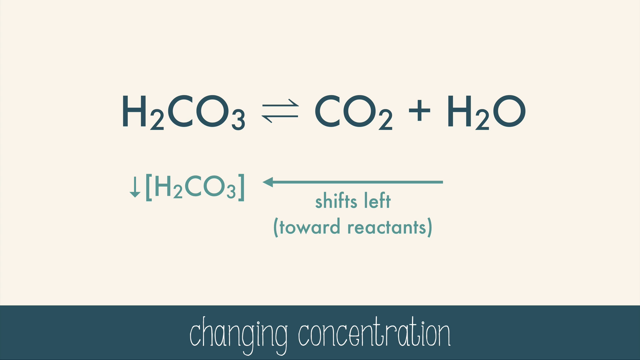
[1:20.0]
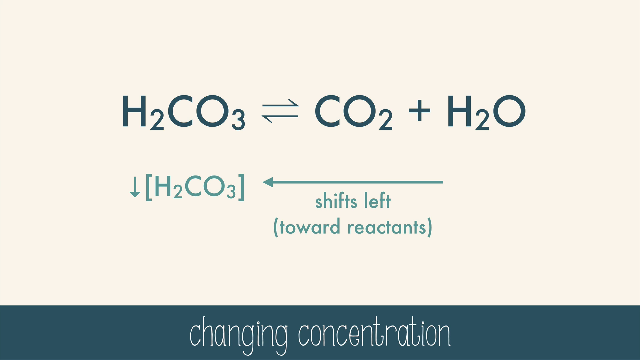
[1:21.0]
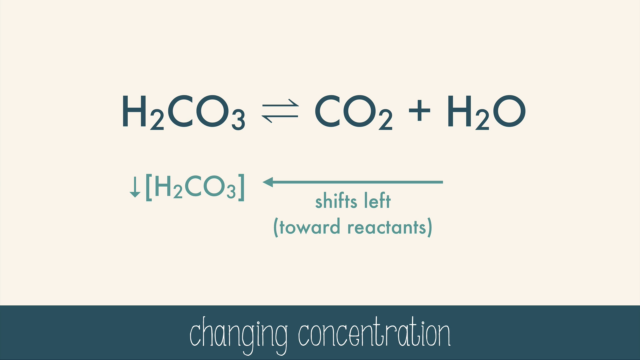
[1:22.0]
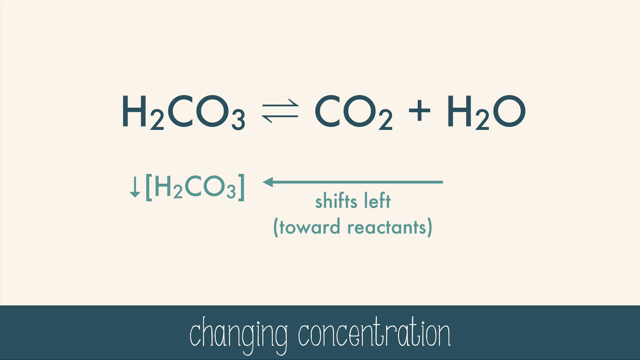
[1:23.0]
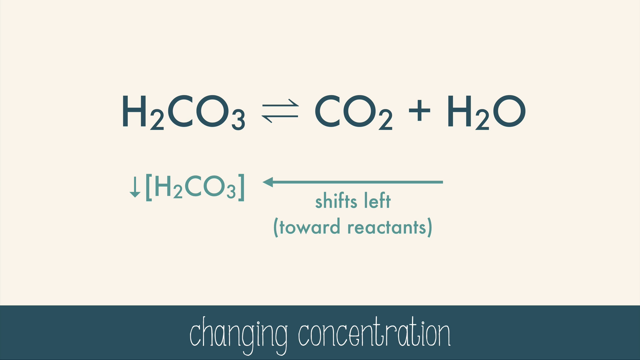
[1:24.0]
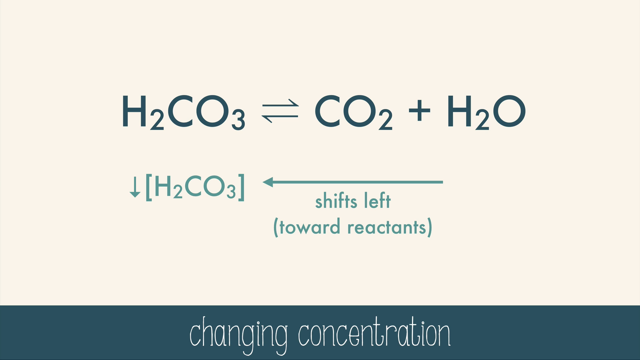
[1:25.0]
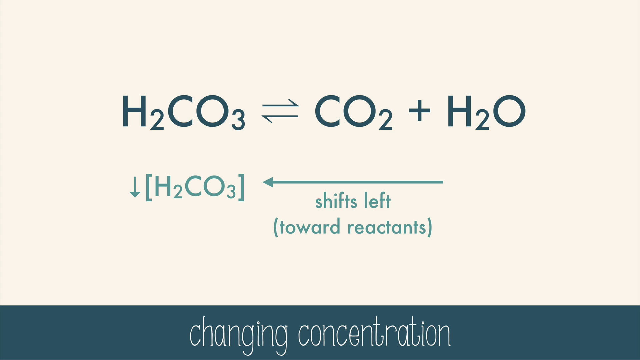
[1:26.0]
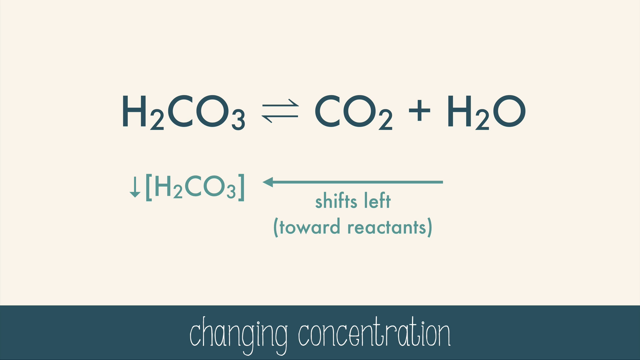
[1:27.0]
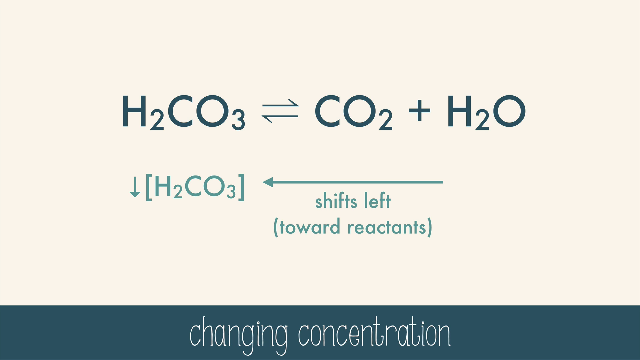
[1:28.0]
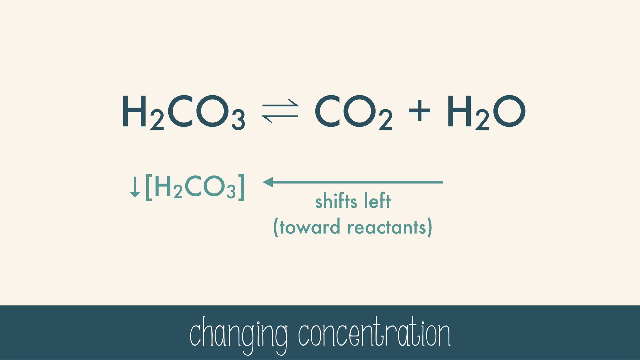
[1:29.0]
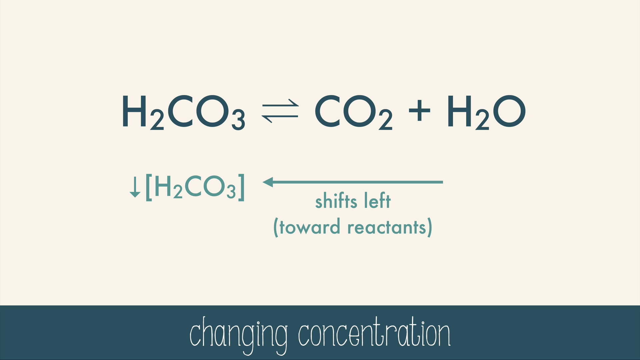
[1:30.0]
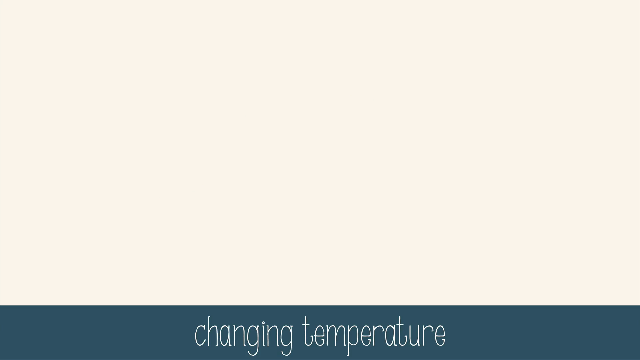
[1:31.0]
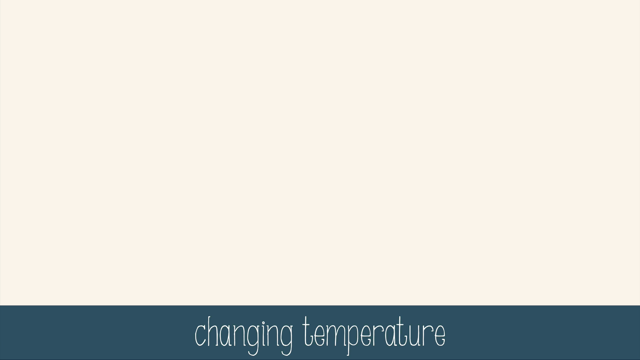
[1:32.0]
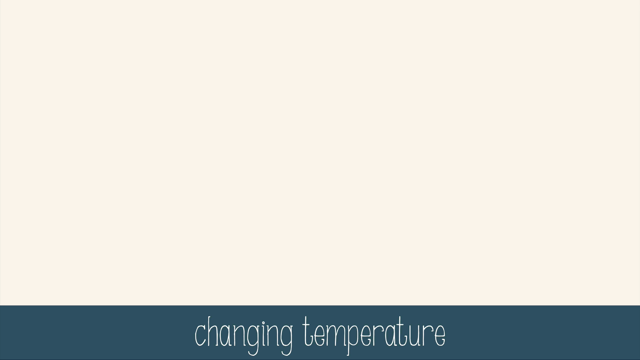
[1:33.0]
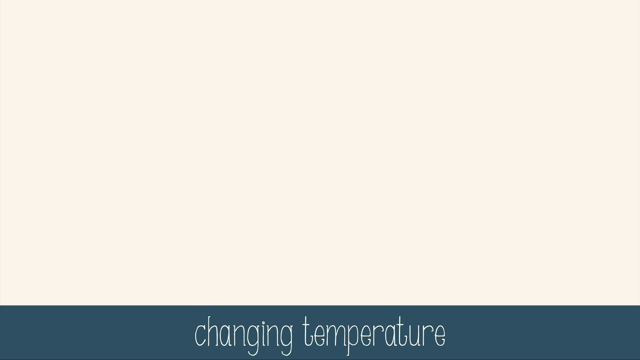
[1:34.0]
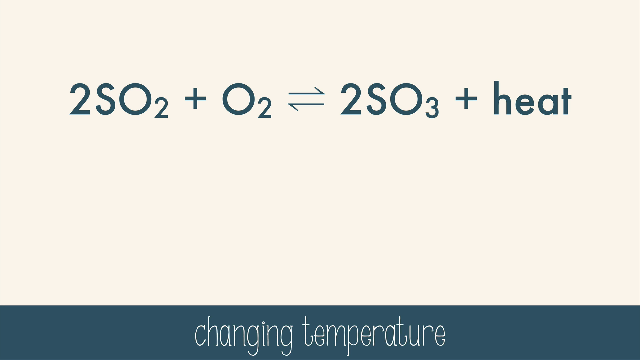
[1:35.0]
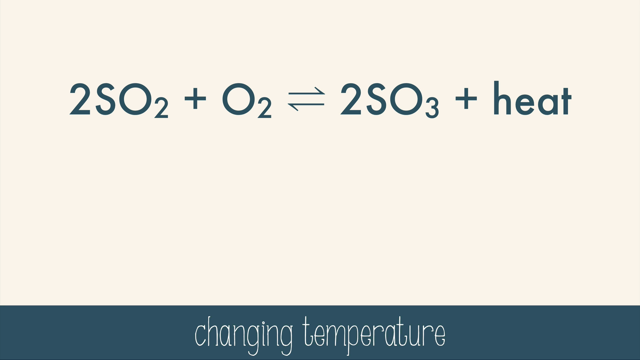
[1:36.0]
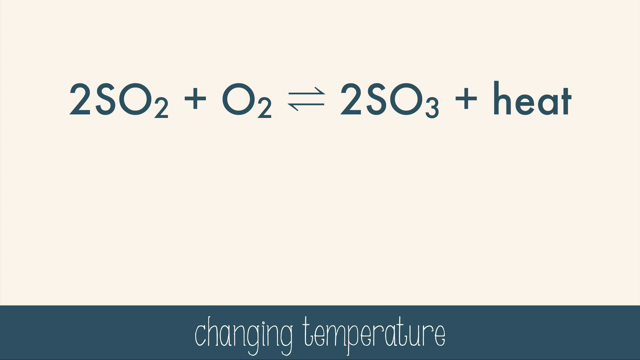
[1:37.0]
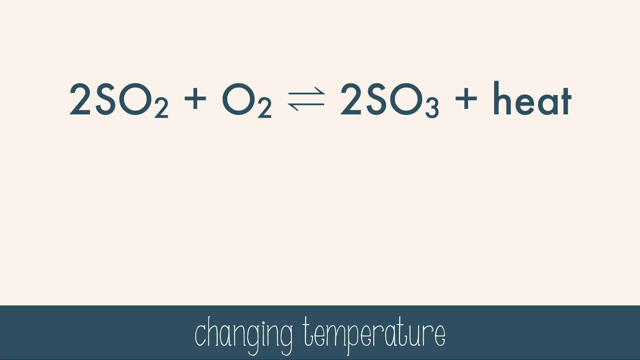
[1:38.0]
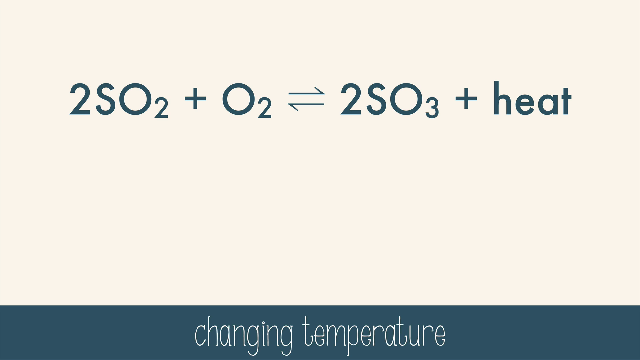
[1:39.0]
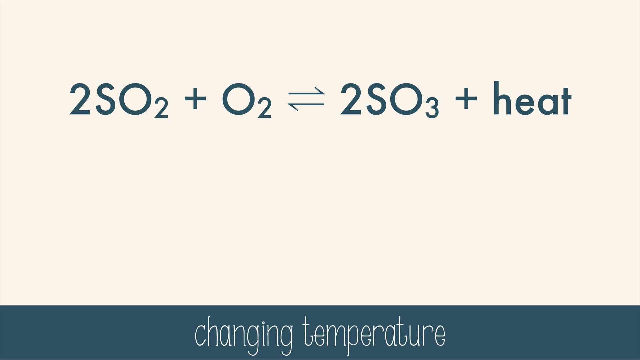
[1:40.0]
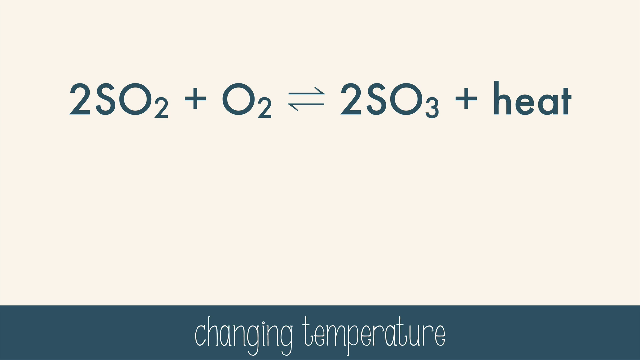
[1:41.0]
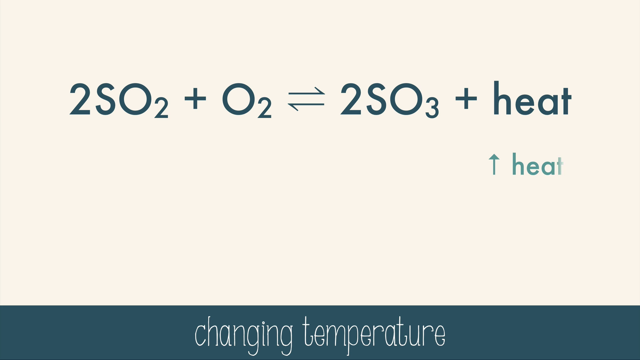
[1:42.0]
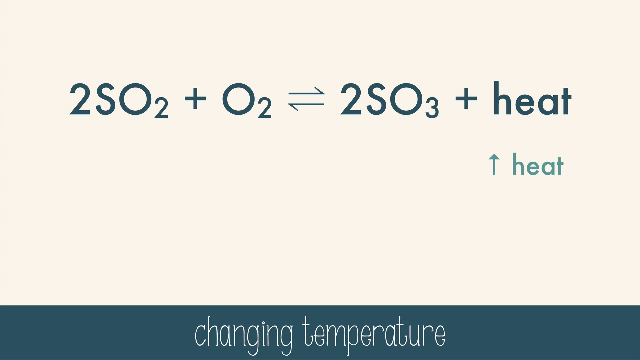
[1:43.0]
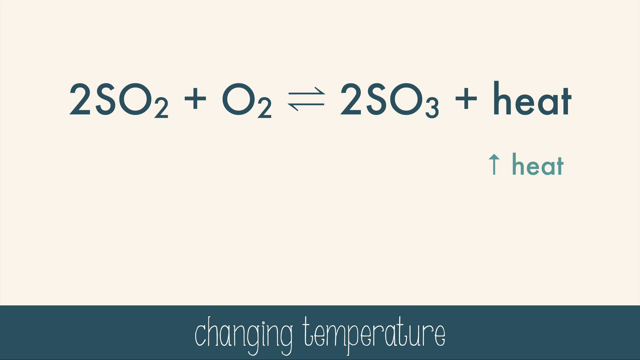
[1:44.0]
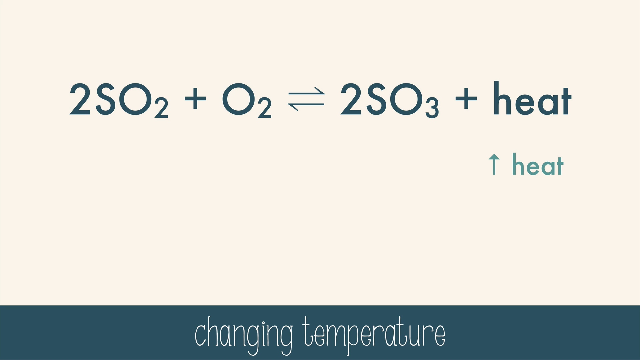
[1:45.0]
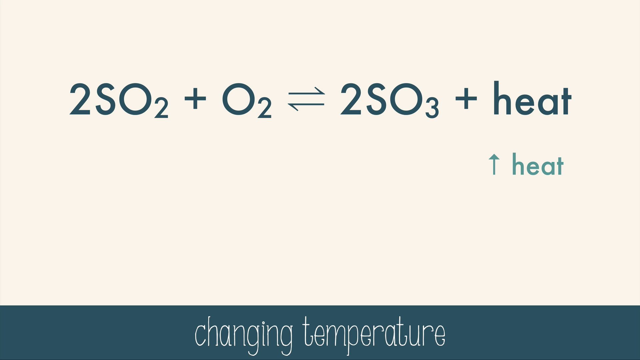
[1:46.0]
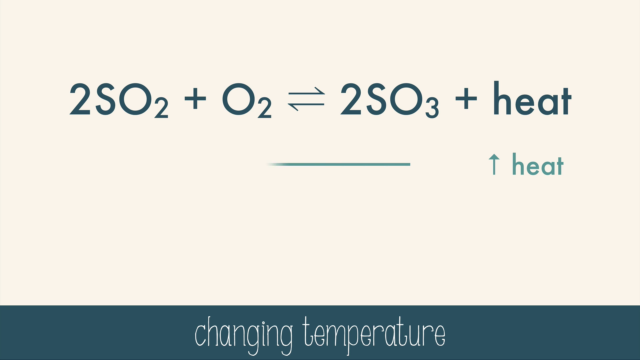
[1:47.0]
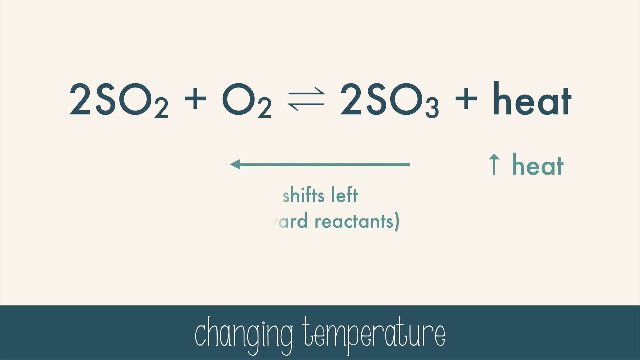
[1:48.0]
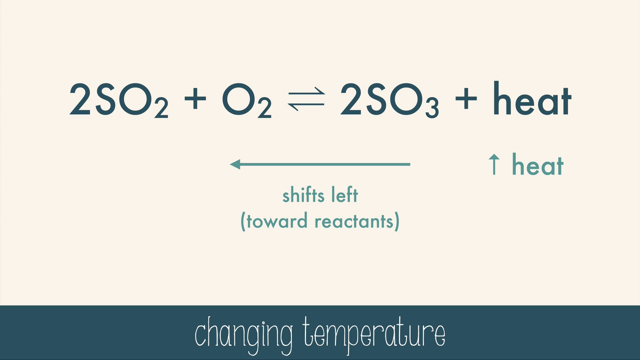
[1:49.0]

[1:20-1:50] On a tan background, H2CO3 is written in very dark blue, followed by a few lines and then CO2 + H2O. Writing in a lighter shade of blue follows: a down arrow, H2CO3, and an arrow pointing left, with "shifts left towards reactants" underneath. At the very bottom, a blue banner with white text says "Changing Concentration". The page stays for several more seconds before moving on. The blue banner then reads "Changing Temperature" and blue text appears above: 2SO2 + O2, some lines, then 2SO3 + heat. Under the heat is an upward-pointing arrow and, in a lighter blue, "heat". An arrow points to the left, and under it is "shift left towards reactants".